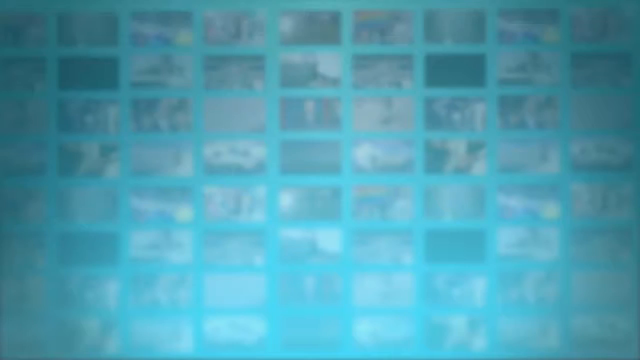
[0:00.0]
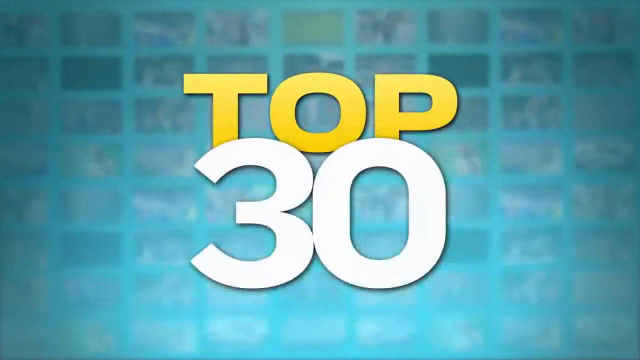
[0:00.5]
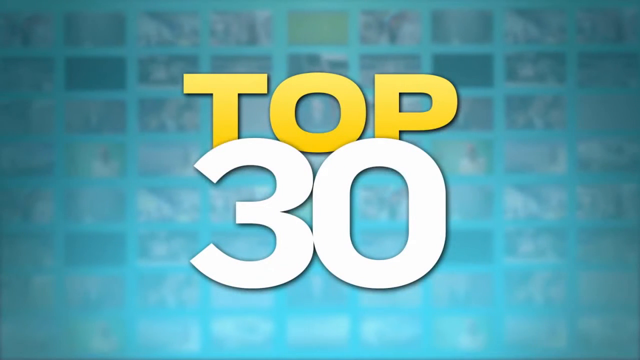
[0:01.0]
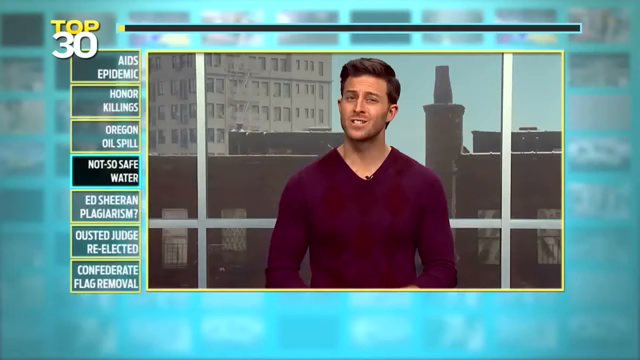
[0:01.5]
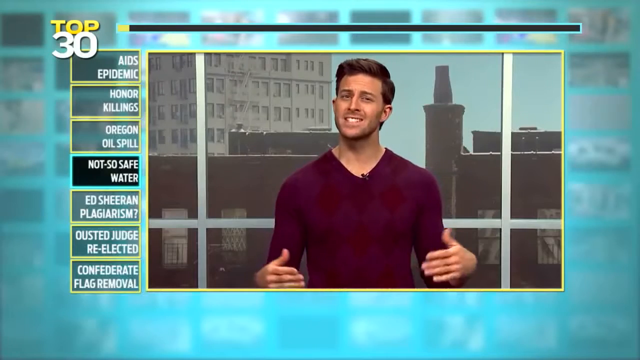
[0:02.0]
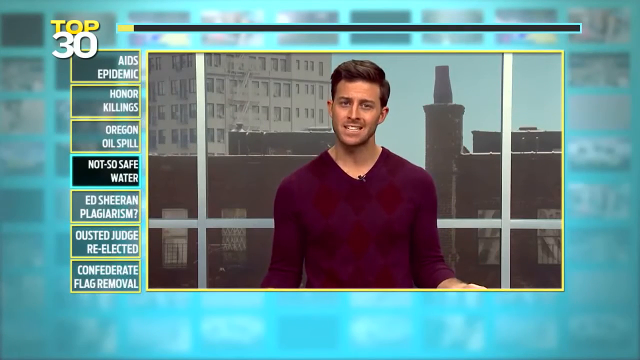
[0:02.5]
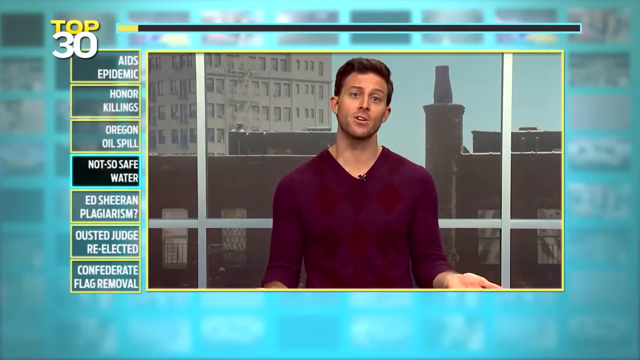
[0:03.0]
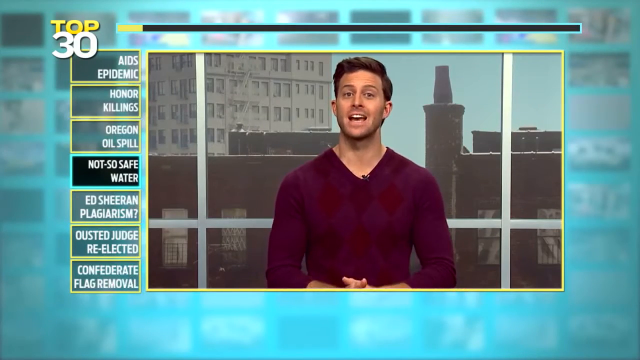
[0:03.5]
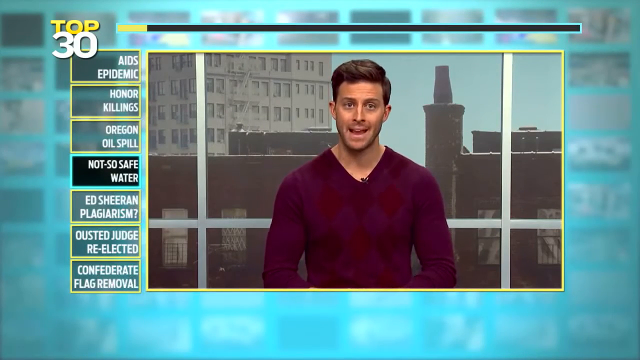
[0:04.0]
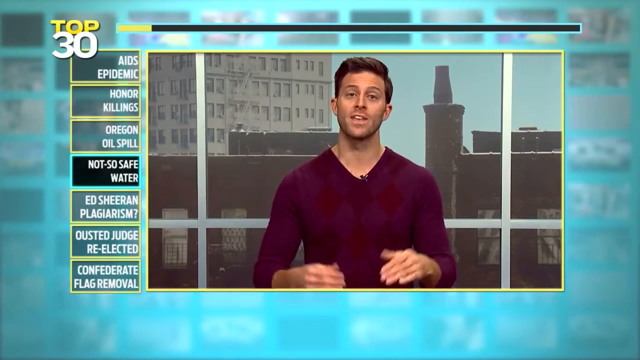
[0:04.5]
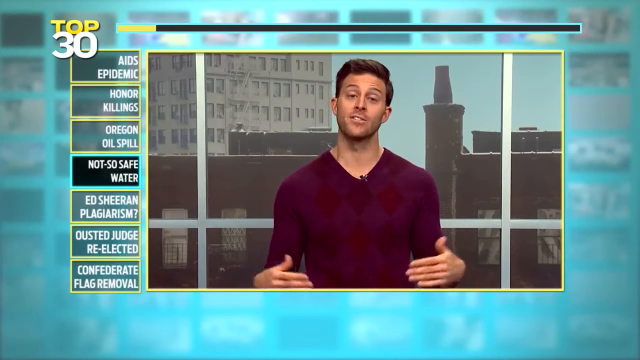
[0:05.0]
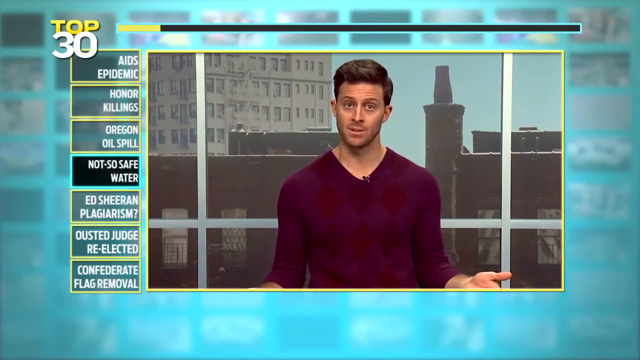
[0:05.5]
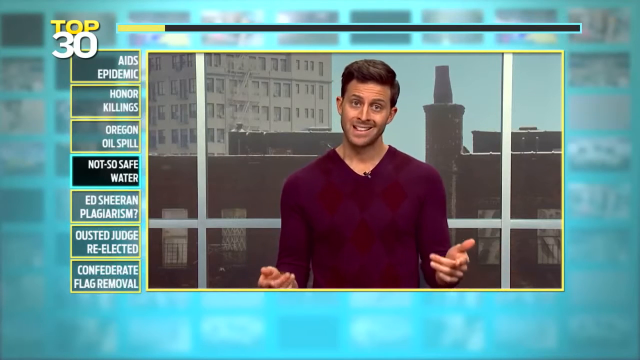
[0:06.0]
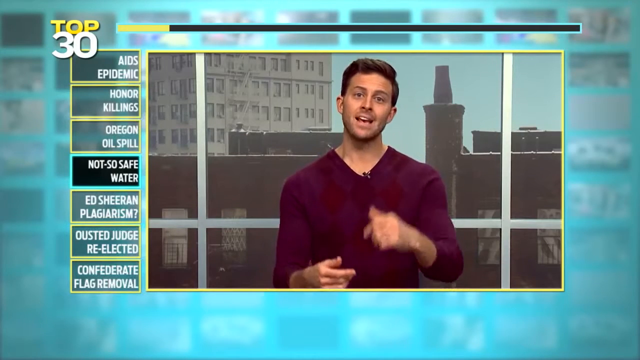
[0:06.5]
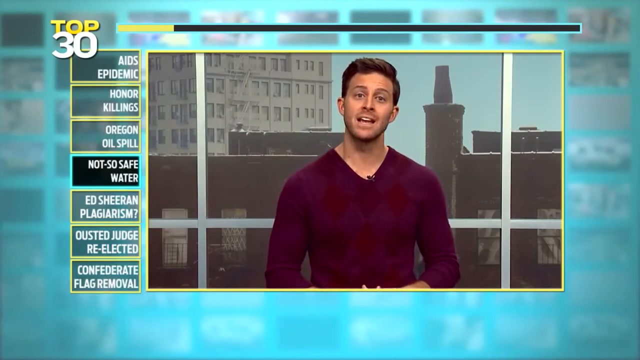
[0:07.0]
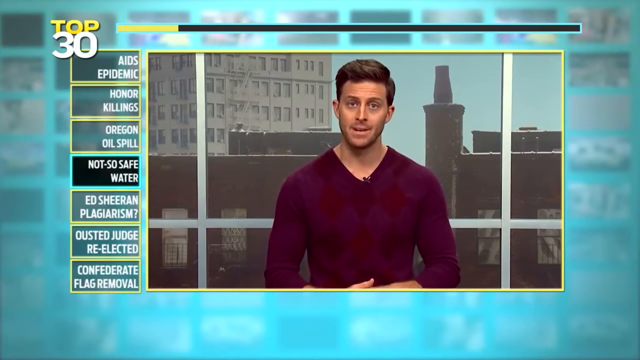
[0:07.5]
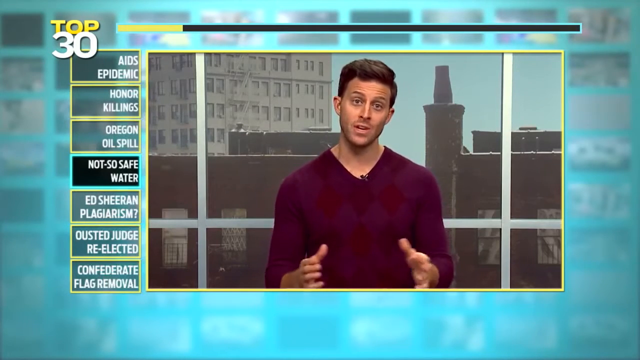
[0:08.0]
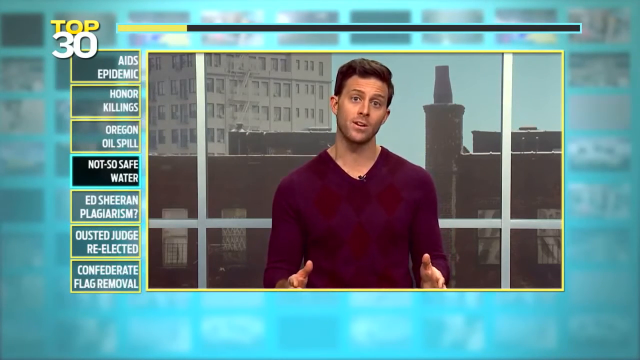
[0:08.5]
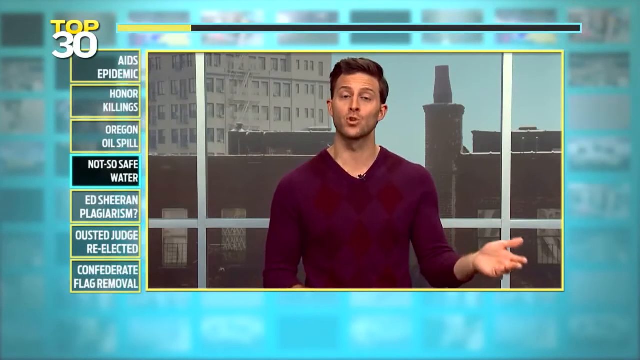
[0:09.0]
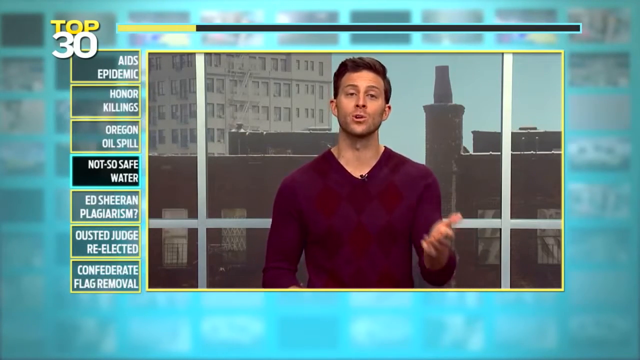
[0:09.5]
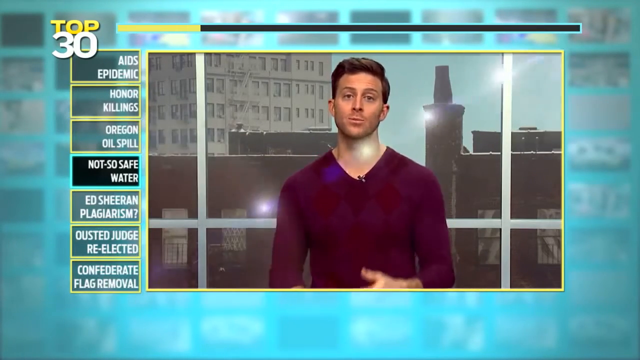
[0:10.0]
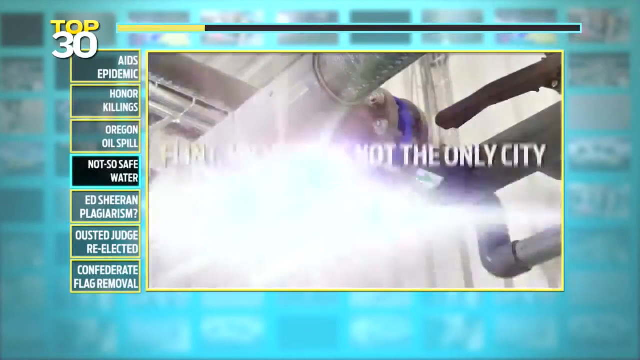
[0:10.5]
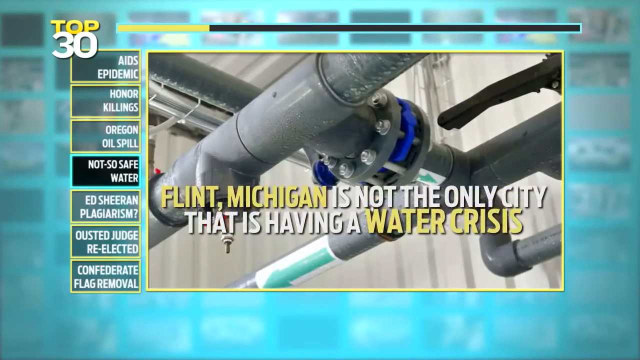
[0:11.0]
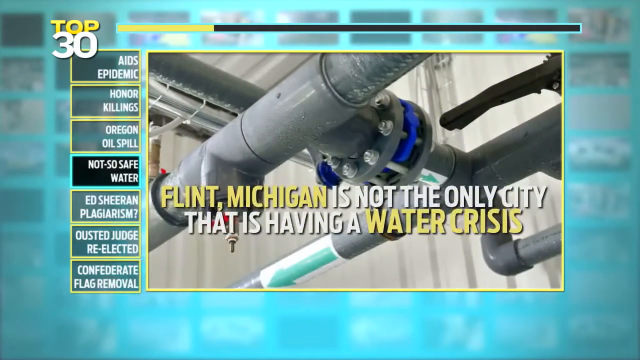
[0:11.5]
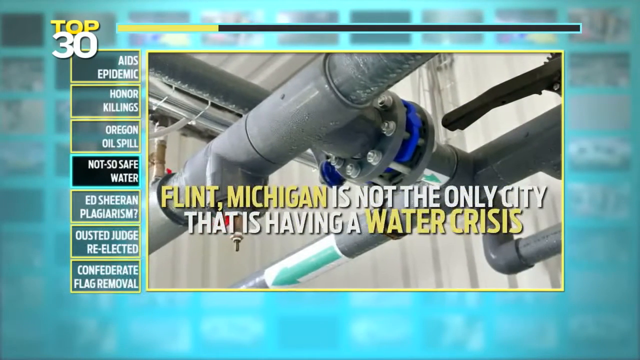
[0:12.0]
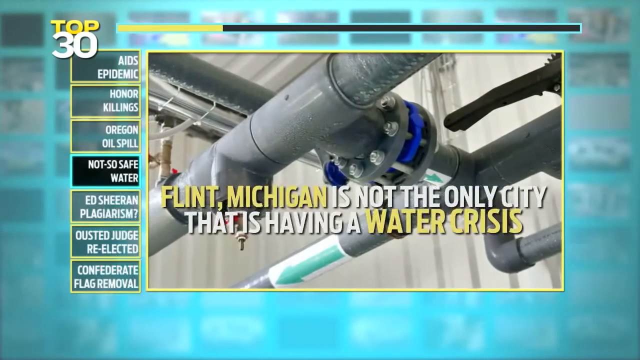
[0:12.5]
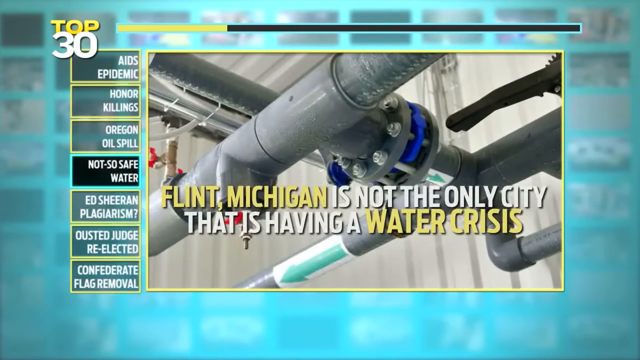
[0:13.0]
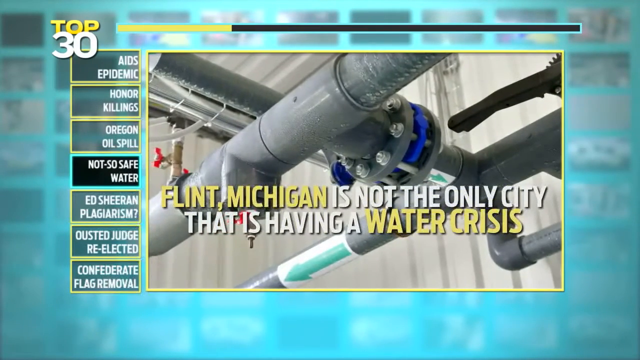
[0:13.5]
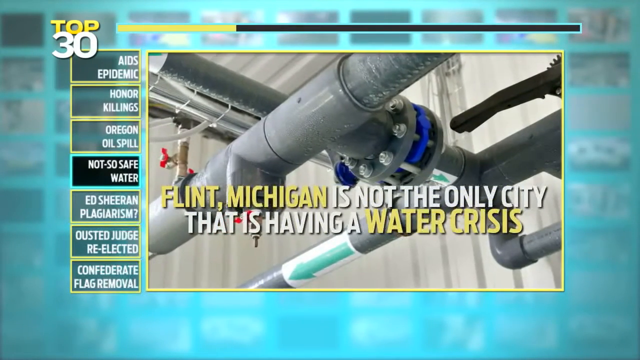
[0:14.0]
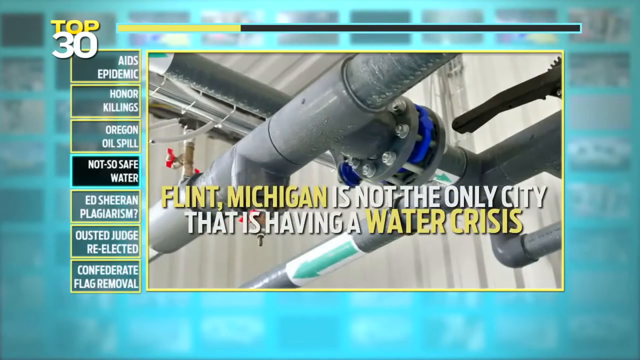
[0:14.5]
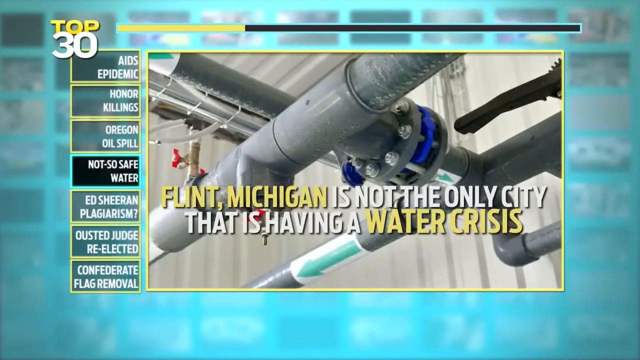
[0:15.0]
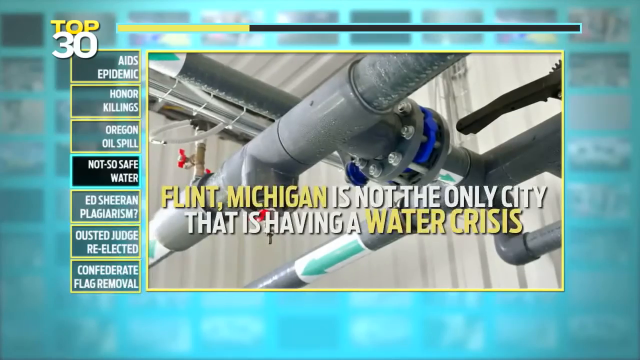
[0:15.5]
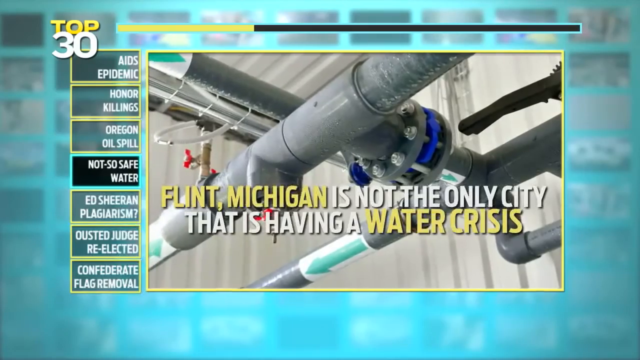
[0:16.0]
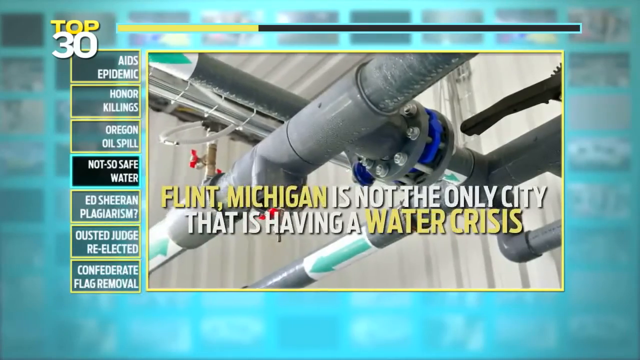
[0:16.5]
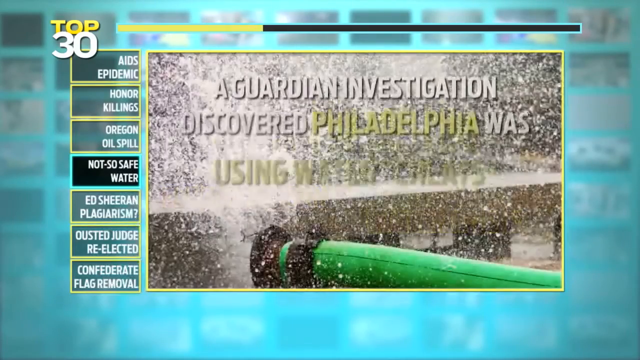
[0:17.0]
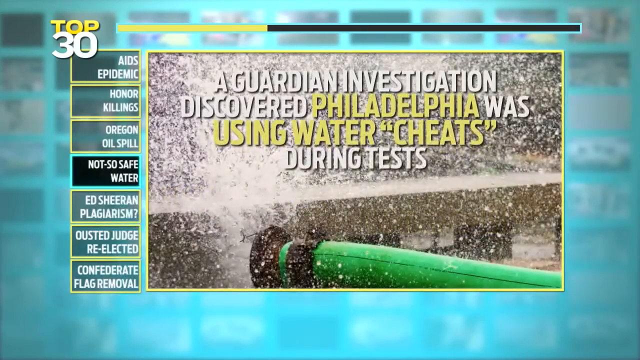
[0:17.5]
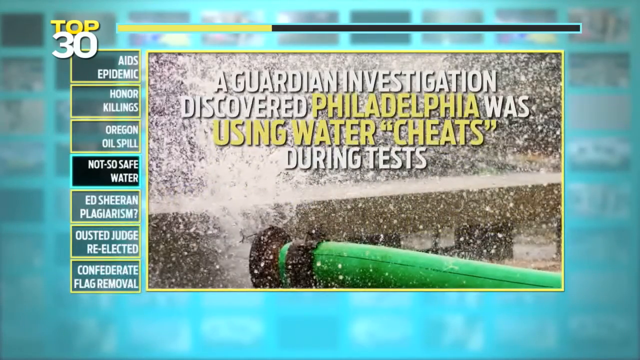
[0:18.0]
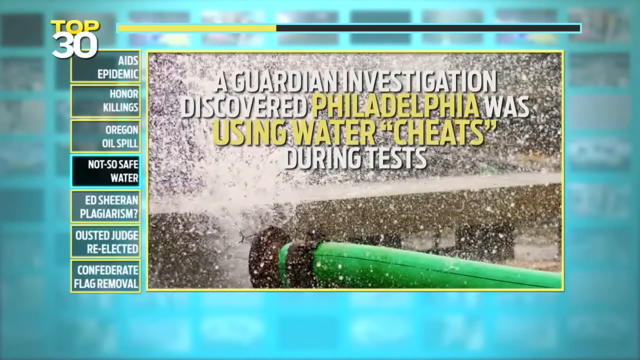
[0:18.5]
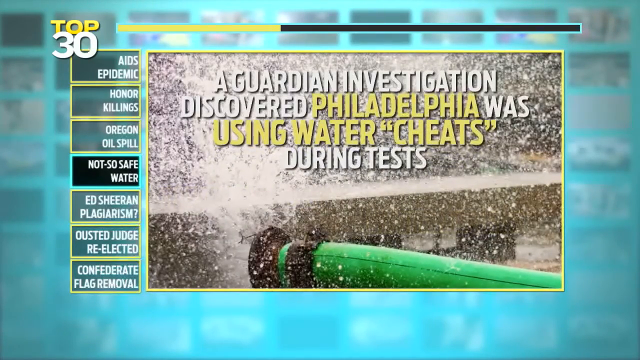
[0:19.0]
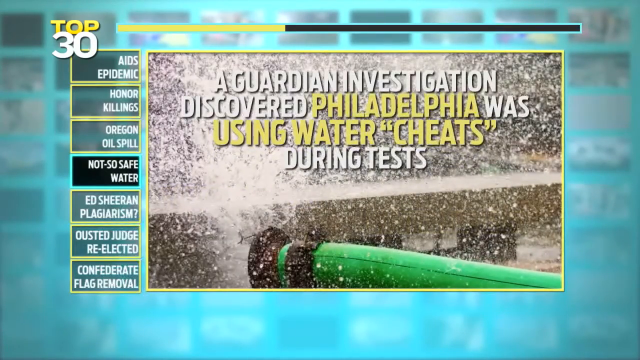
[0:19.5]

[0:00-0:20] The video opens on a bluish screen; many photos appear to be tiled in the background, but it is blurry and hard to make out. Text in front reads "Top 30." A man in a purple V-neck sweater appears, with a microphone clipped on. He has both hands out at his sides with his elbows at about a 90-degree angle, and his head is tilted slightly to the left. He is in the middle of the screen with a border around him; the left border lists several topics, such as "AIDS epidemic," "honor killings" and "Oregon oil spill," and the highlighted one is "not so safe water." The man speaks to the camera, moving his hands around quite a bit. He holds both hands out in front of him with the palms facing each other and the thumbs pointing upward, then waves his left hand a little to the left, then puts his palm out toward the viewer as if asking for something. A bright flash of light follows, and the view shows the inside of a building, with a close-up of pipes connected at all sorts of angles. Text reads "Flint, Michigan is not the only city that is having a water crisis."